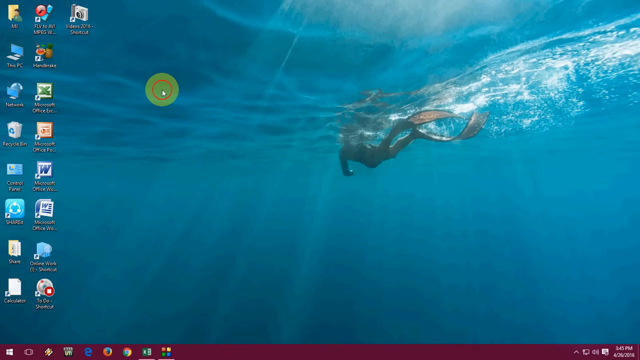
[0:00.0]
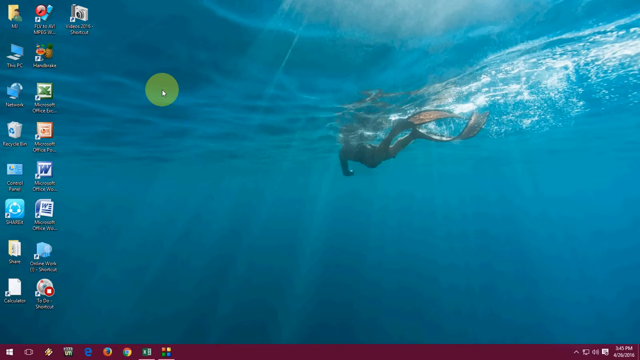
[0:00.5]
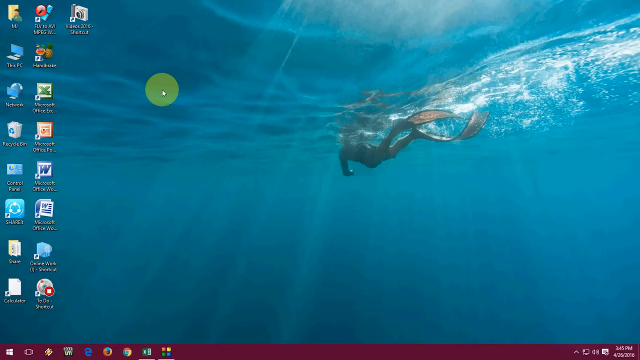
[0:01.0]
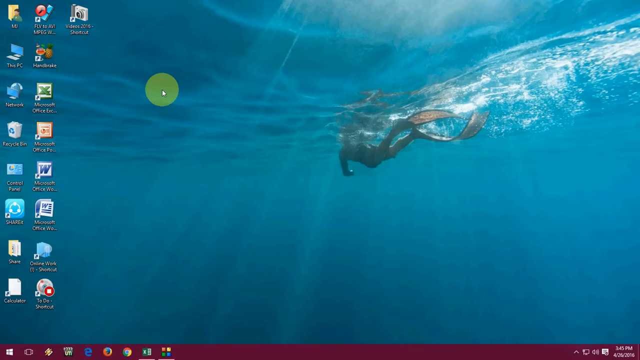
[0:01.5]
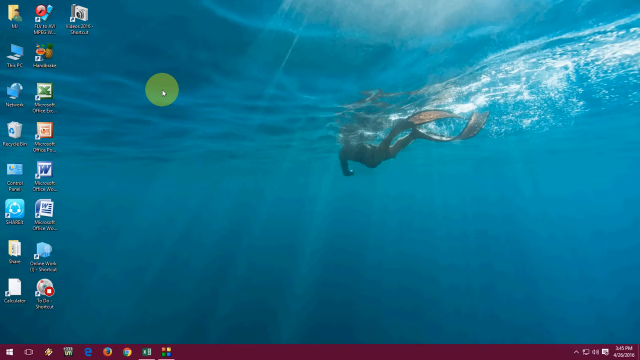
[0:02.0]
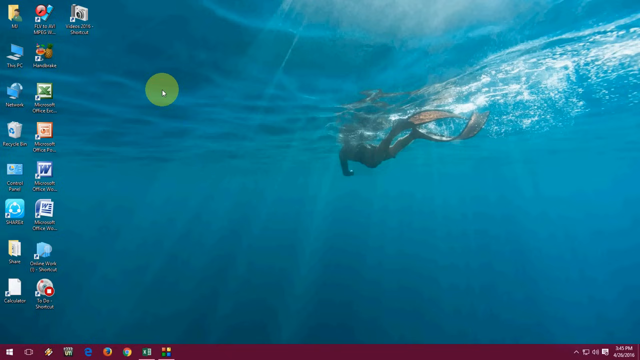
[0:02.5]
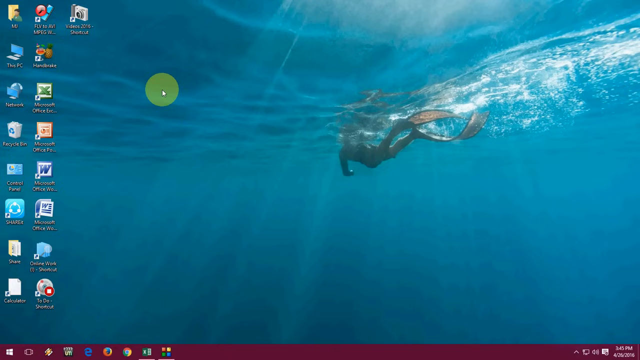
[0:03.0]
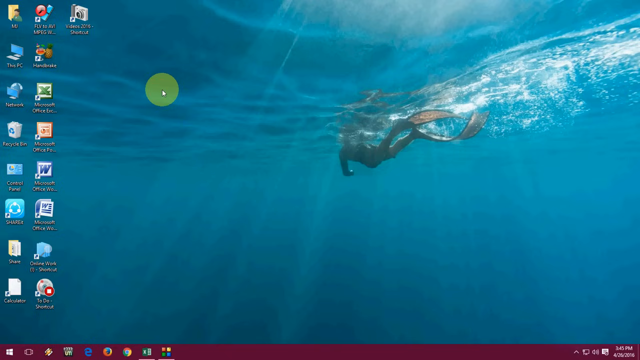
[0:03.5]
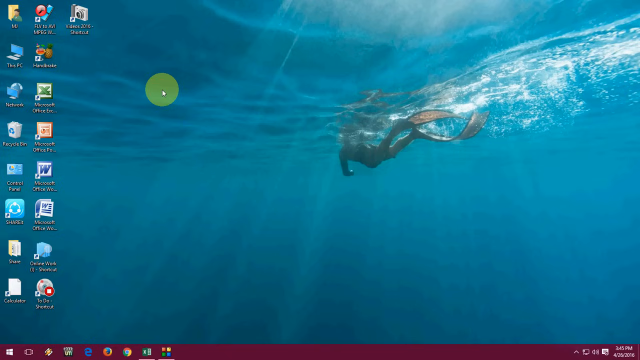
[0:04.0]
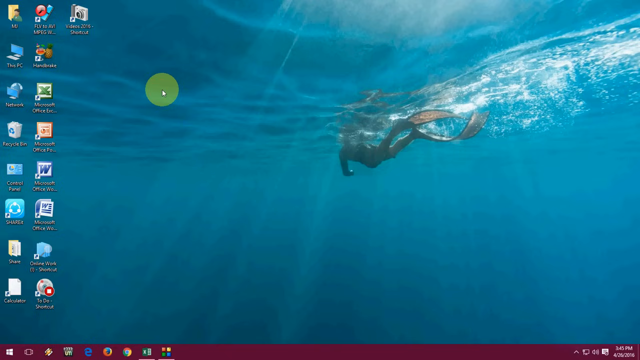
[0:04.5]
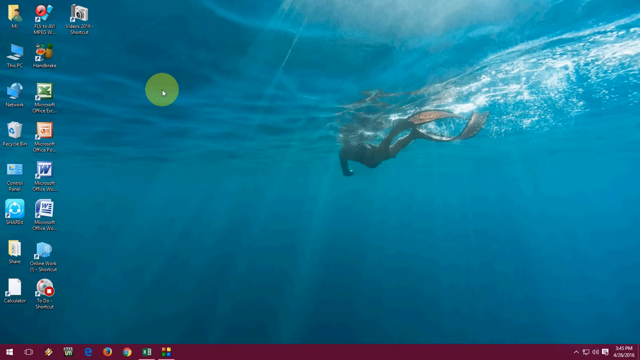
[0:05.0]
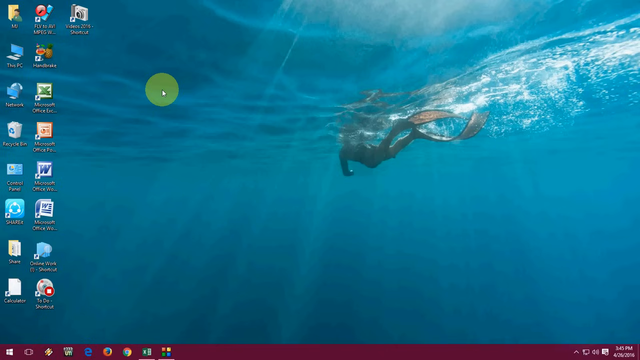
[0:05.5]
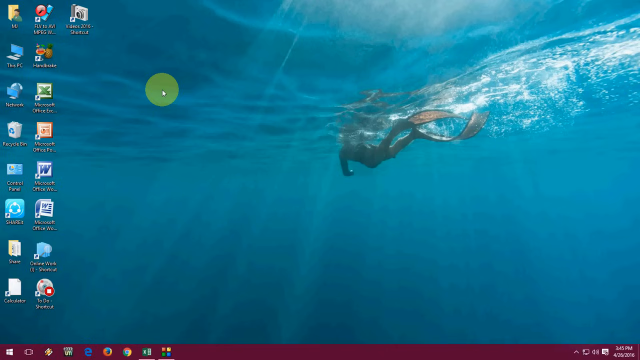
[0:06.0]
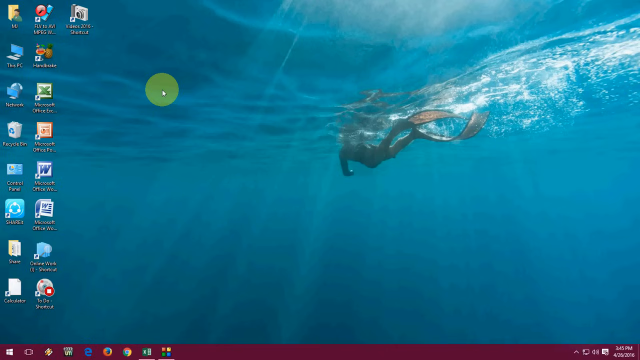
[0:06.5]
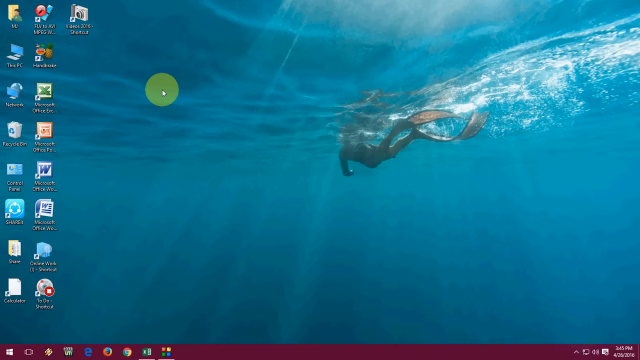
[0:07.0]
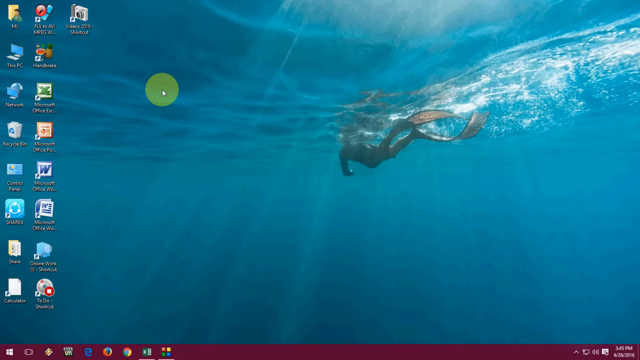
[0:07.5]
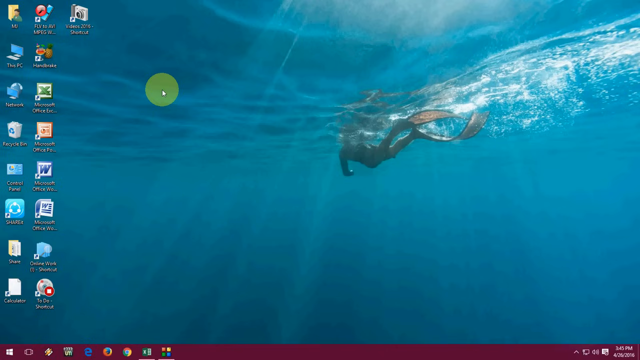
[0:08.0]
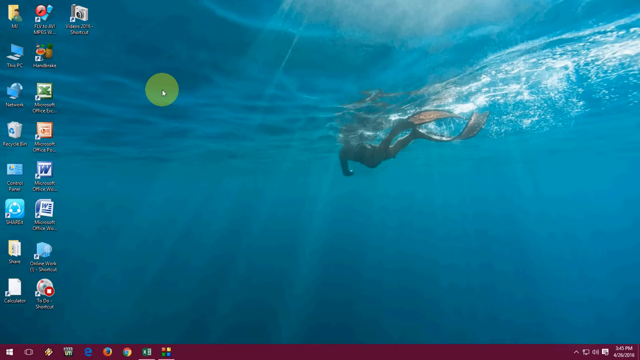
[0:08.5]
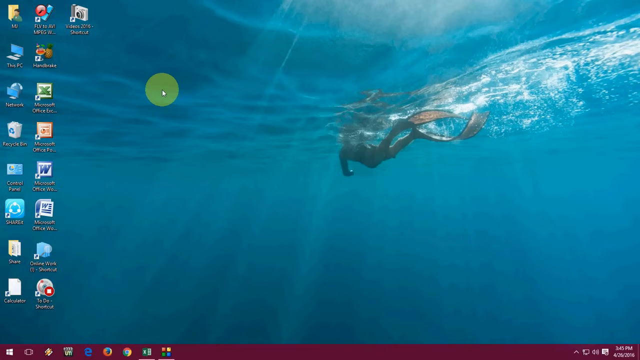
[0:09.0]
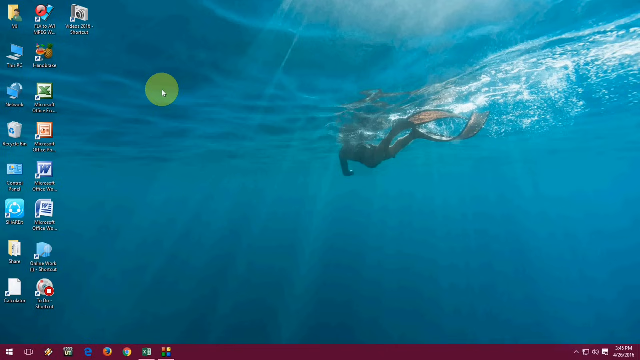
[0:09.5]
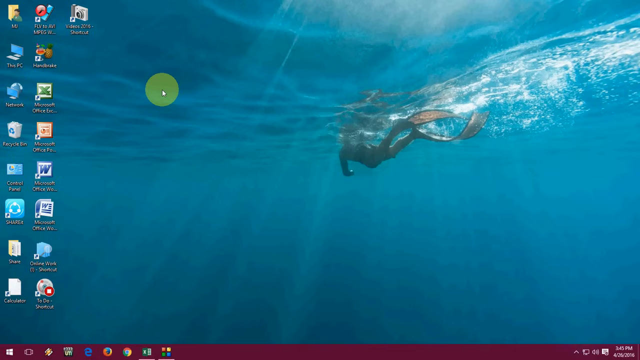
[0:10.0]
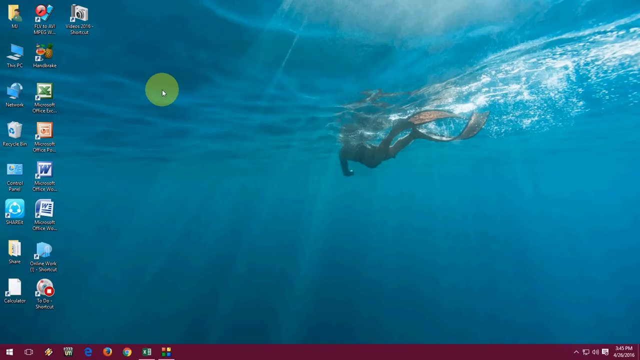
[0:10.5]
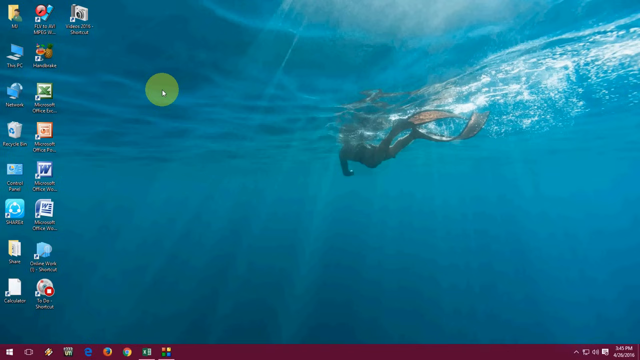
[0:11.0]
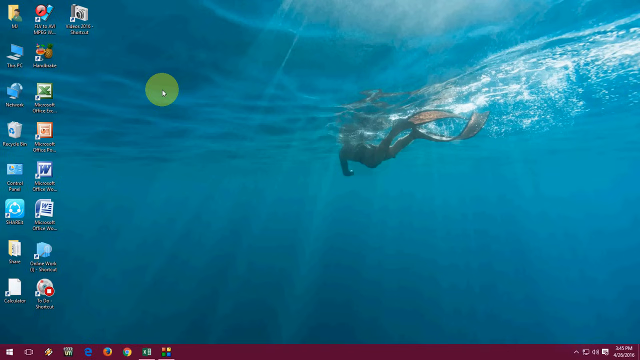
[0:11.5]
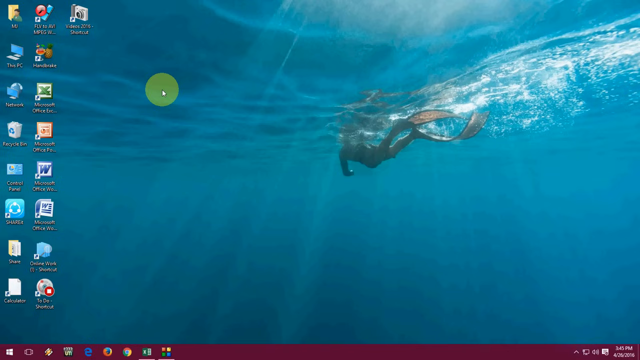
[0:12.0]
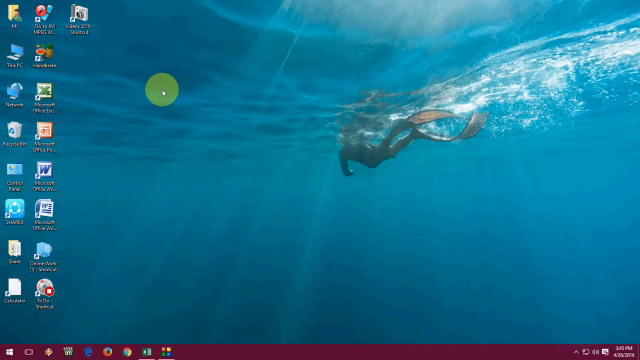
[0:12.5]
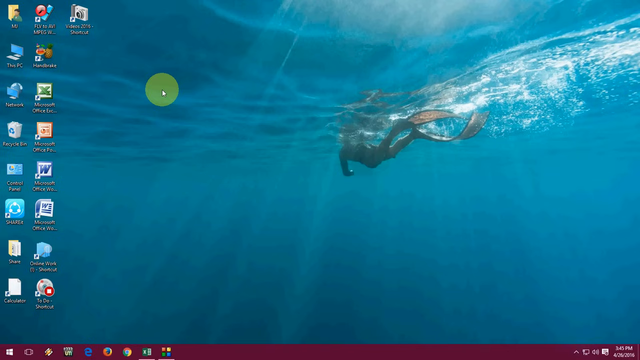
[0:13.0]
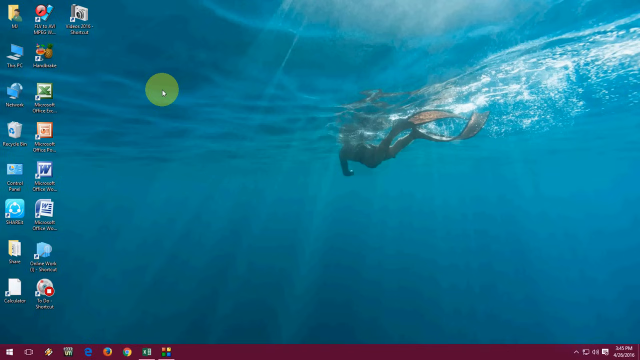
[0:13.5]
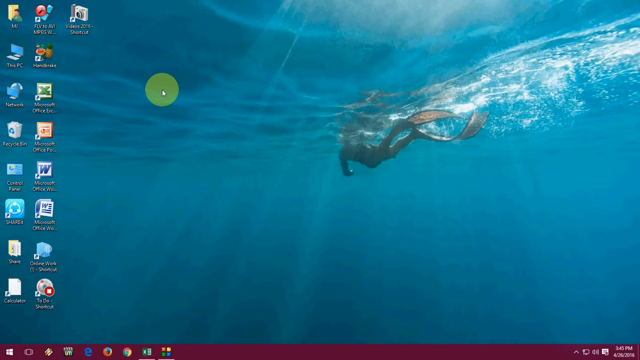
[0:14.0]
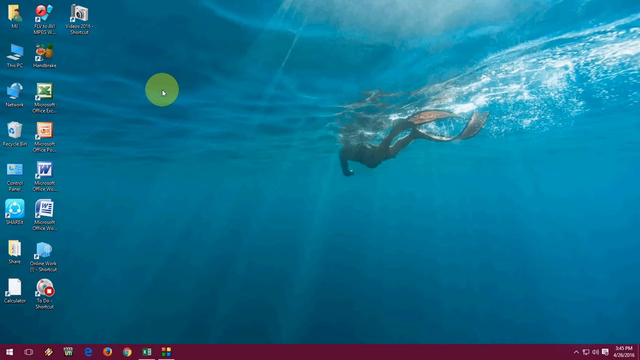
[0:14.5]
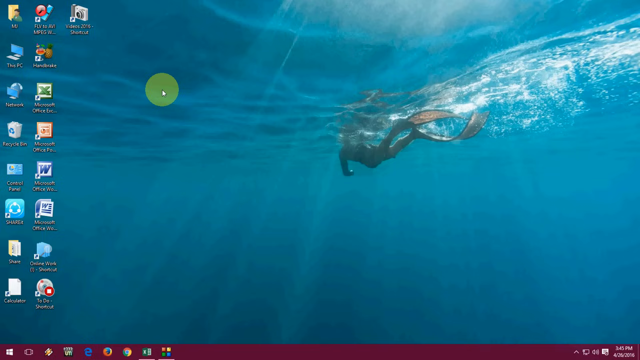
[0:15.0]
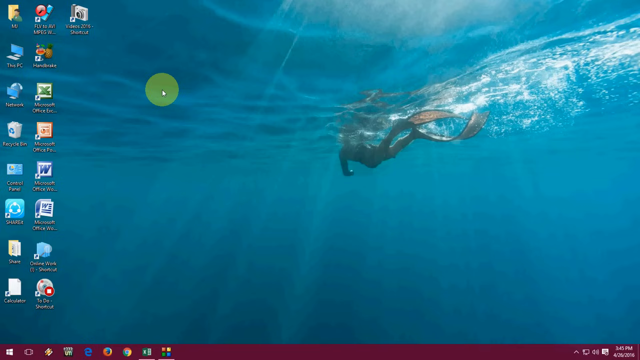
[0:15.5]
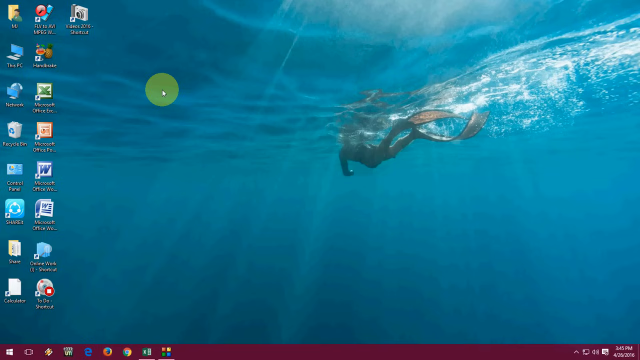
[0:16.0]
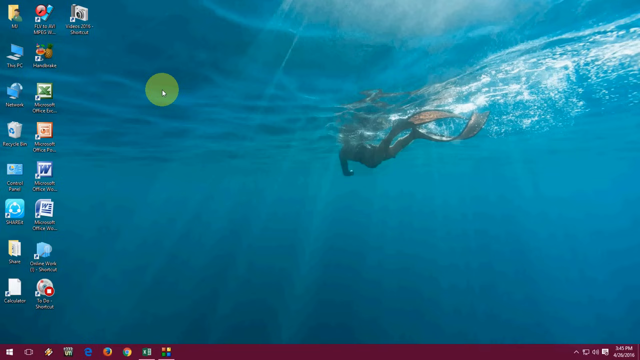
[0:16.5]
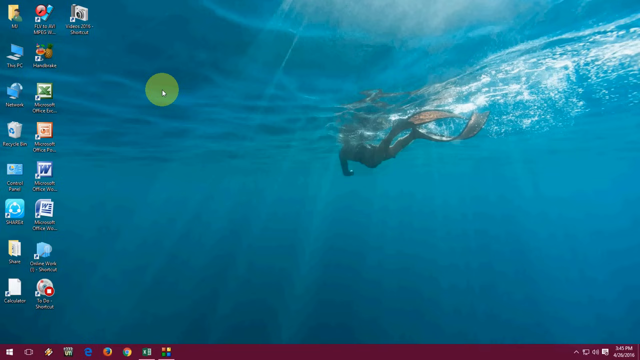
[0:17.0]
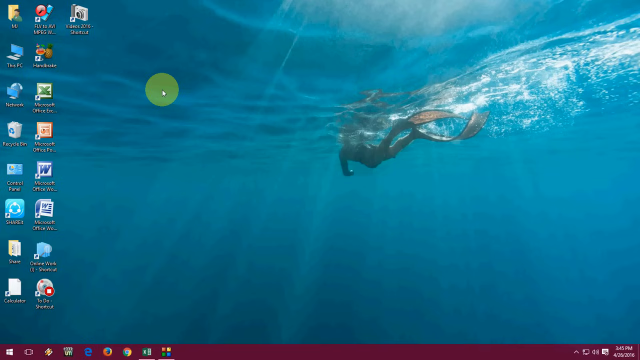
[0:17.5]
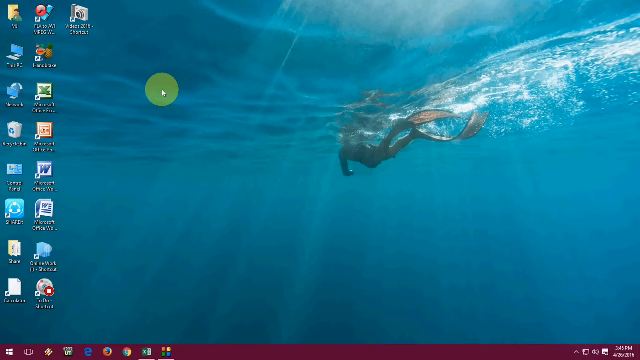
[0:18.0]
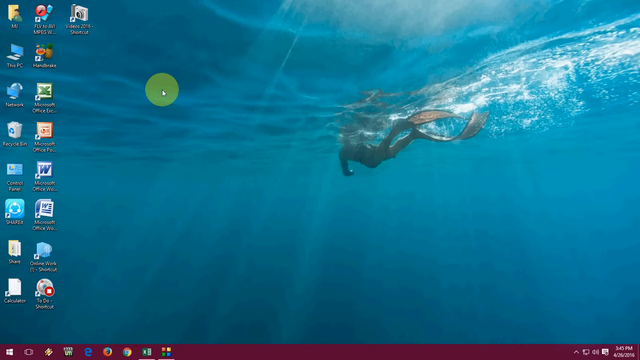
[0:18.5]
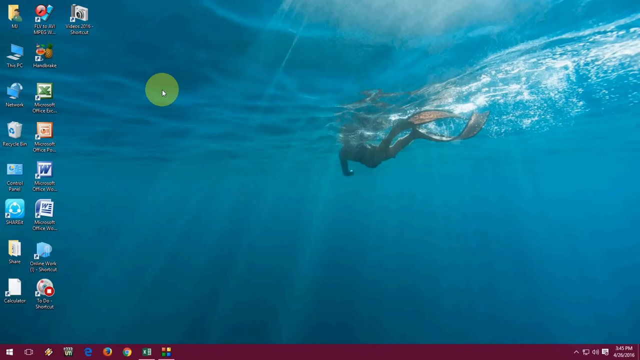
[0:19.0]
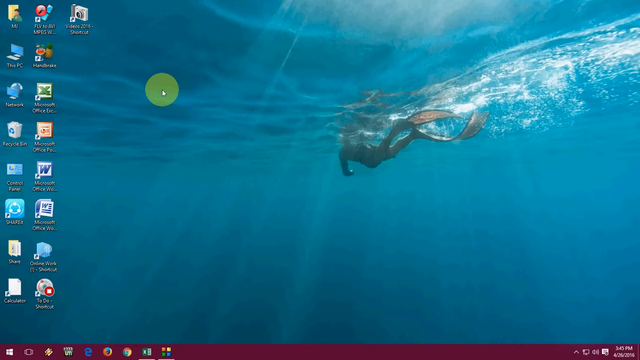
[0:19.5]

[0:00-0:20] The video opens on a computer desktop. The desktop background appears to show someone swimming in the ocean in a scuba outfit with fins on their feet. A green circle is at the top left side of the screen, and the white mouse pointer is inside it. A number of icons run down the left side of the screen. At the top left corner, one looks like a folder with a person on it. Below that is "This PC," showing a computer screen and keyboard. Below that is apparently "Network," showing a computer screen with a globe behind it. Next is a recycle bin that looks like it has stuff in it, papers or trash. Below that is "Control Panel" with a little chart. The next icon's label is unreadable, but the icon is blue with a white circle in it and three dots on the circle. Below that is a file folder with files in it, and below that is apparently "Calculator."